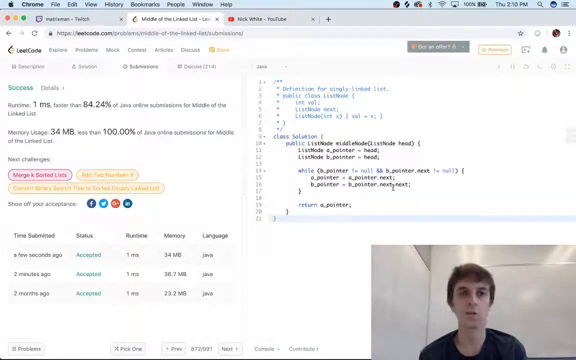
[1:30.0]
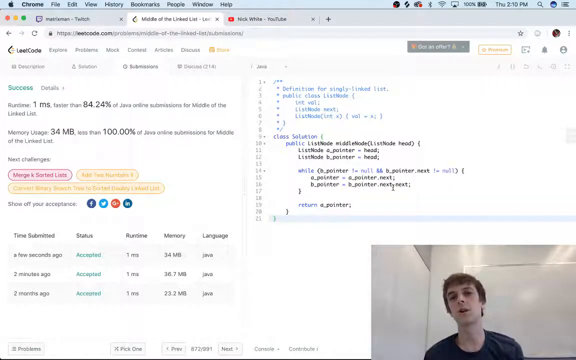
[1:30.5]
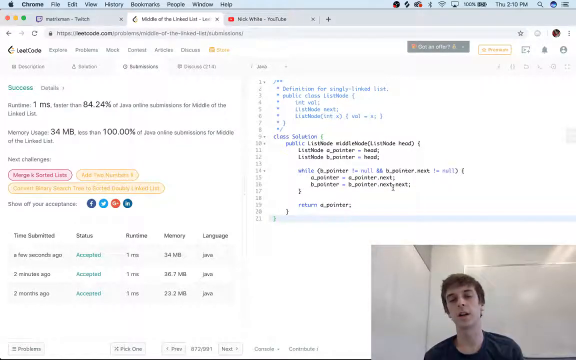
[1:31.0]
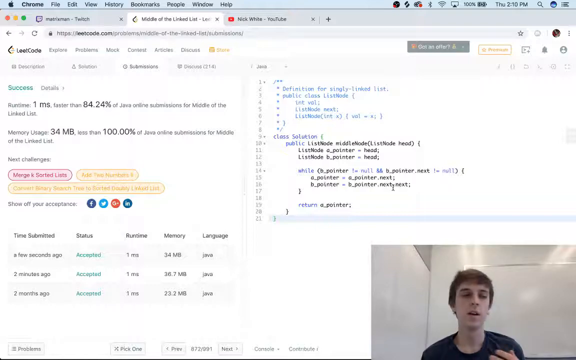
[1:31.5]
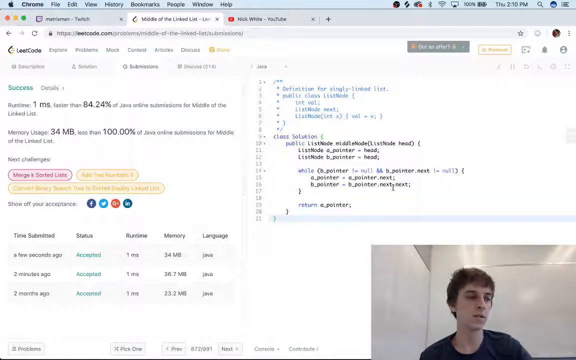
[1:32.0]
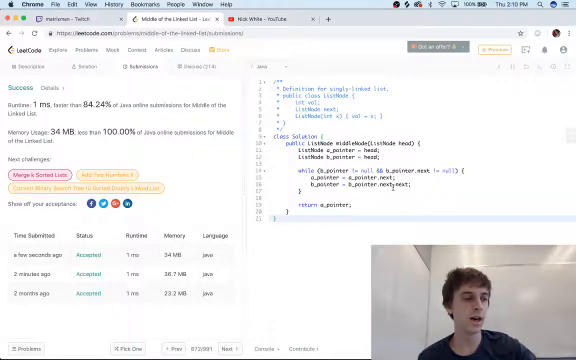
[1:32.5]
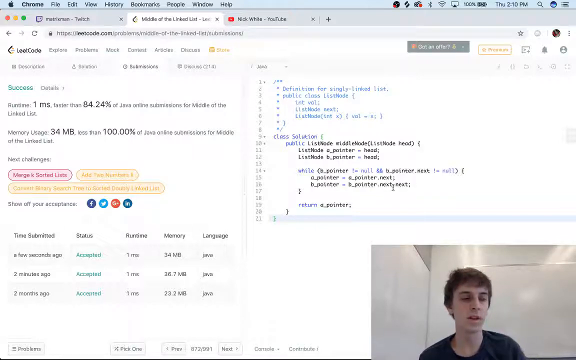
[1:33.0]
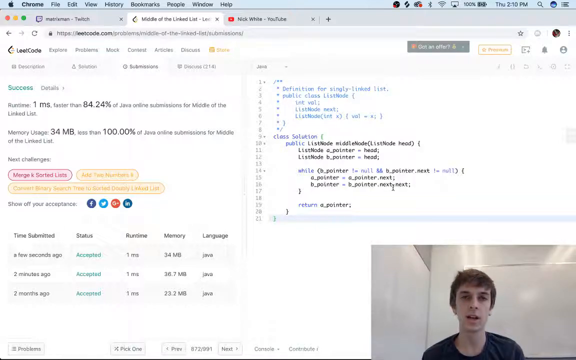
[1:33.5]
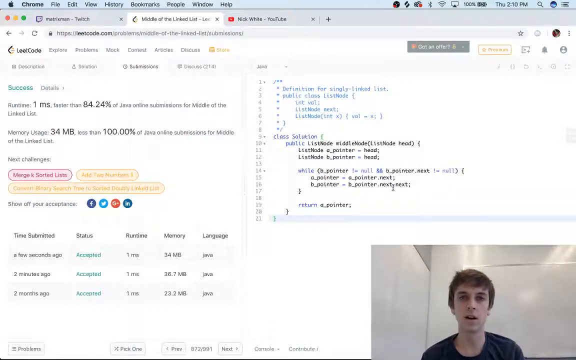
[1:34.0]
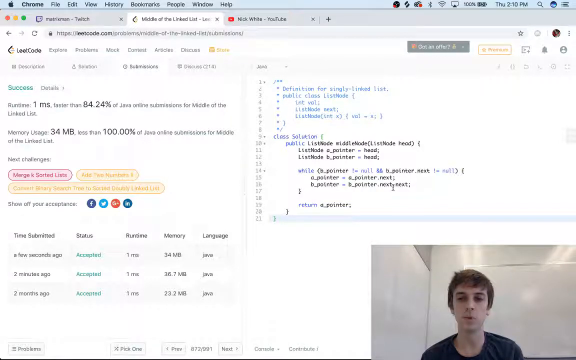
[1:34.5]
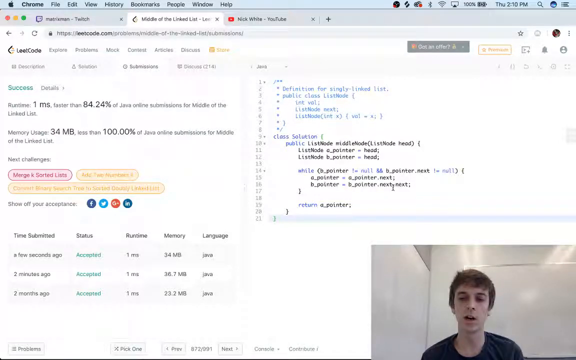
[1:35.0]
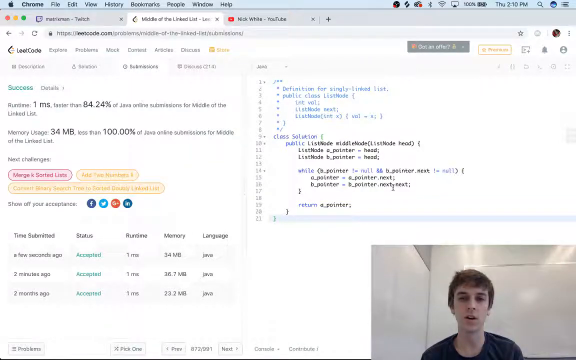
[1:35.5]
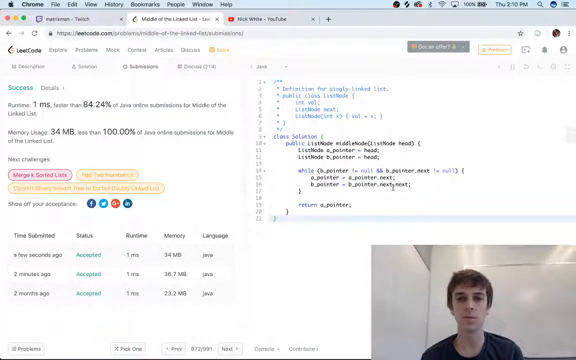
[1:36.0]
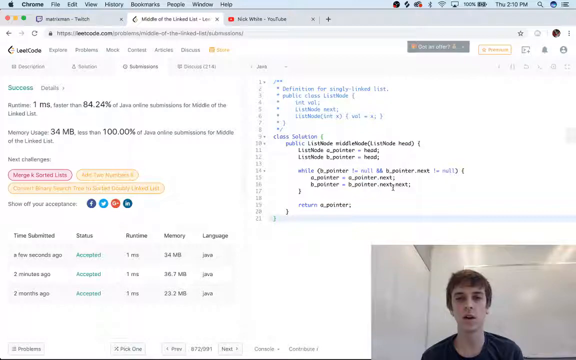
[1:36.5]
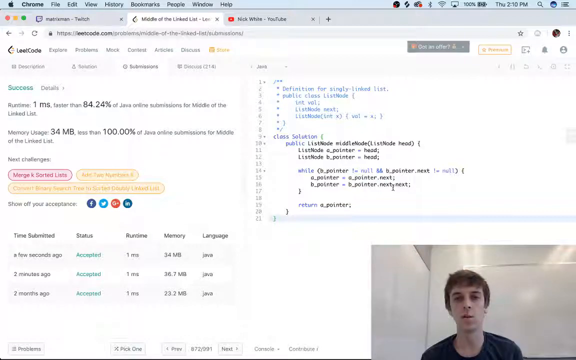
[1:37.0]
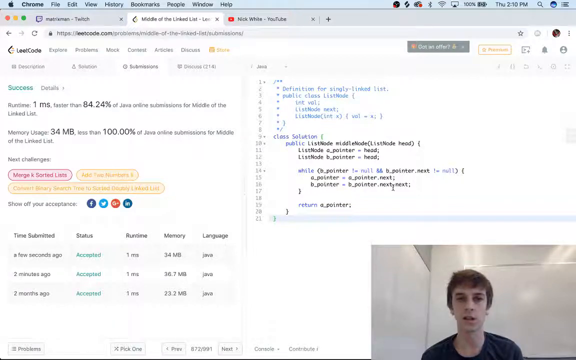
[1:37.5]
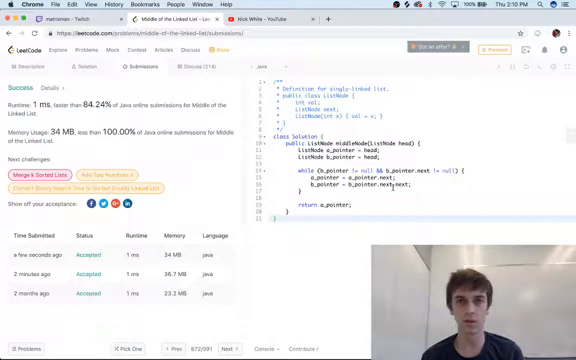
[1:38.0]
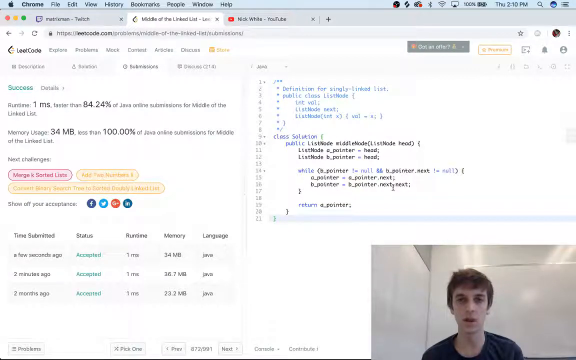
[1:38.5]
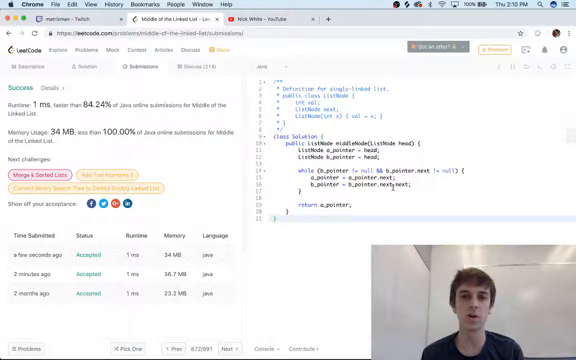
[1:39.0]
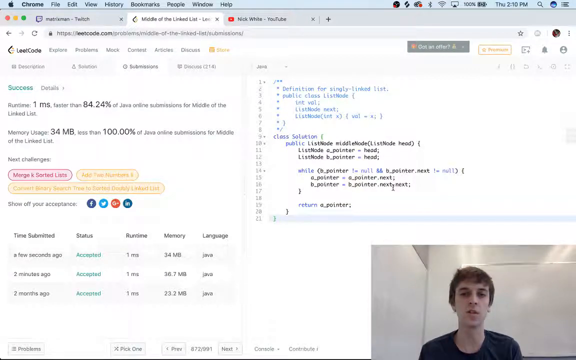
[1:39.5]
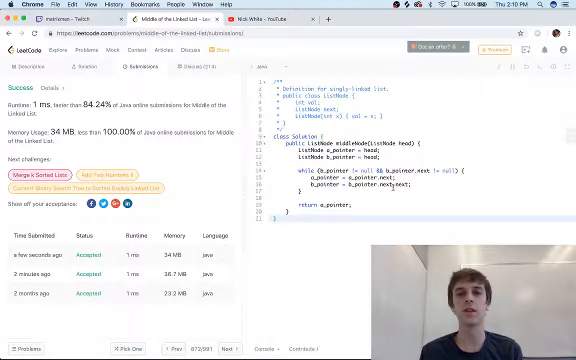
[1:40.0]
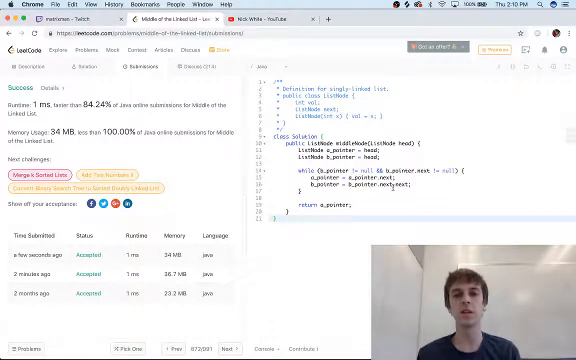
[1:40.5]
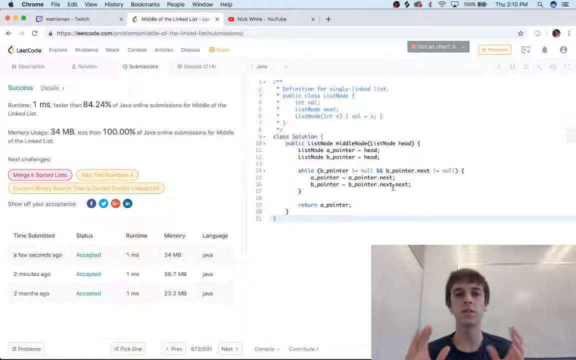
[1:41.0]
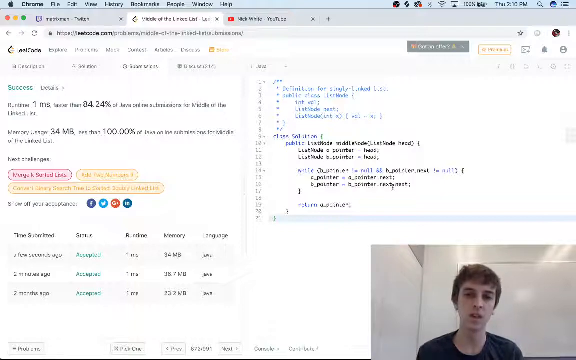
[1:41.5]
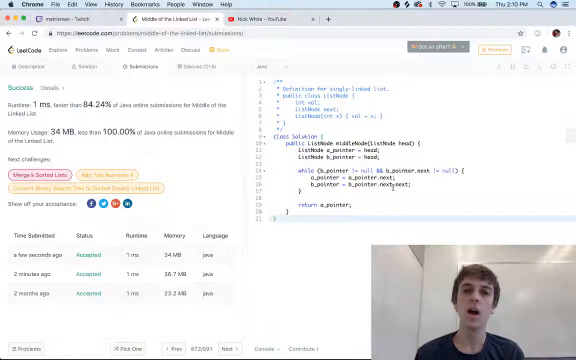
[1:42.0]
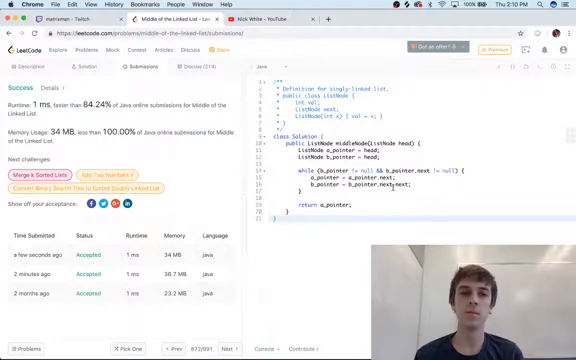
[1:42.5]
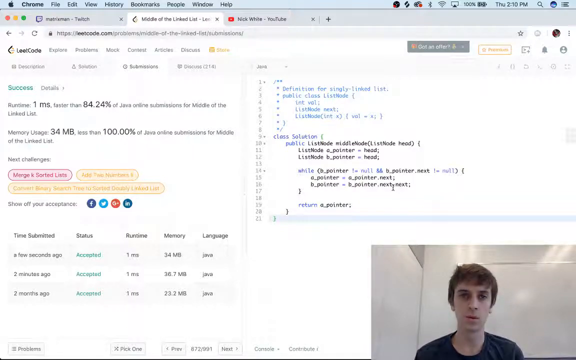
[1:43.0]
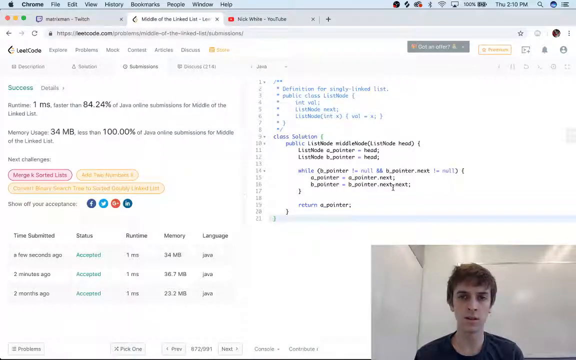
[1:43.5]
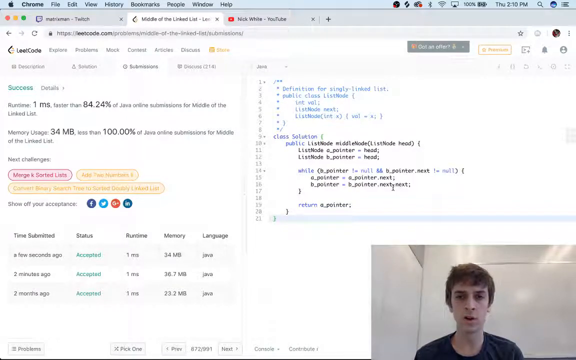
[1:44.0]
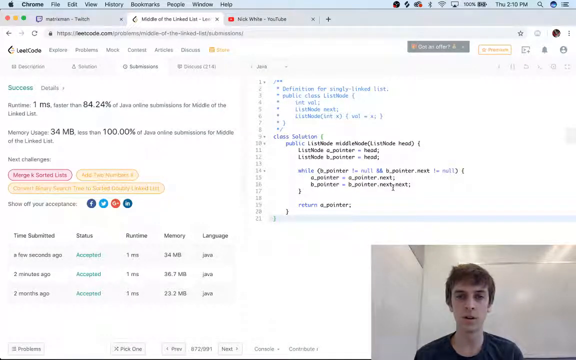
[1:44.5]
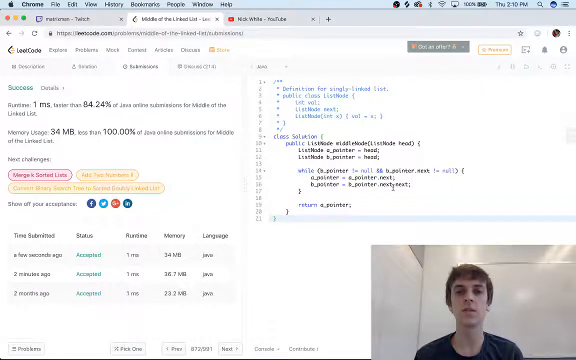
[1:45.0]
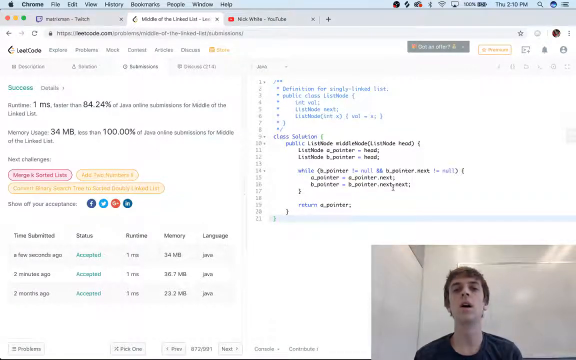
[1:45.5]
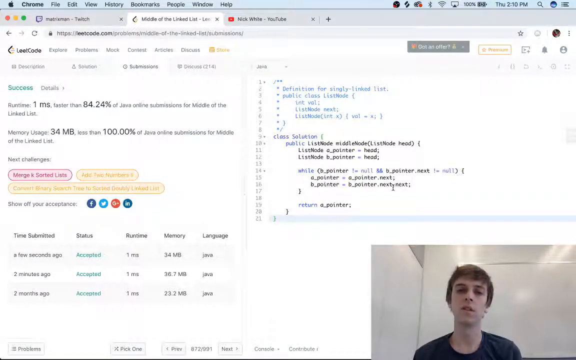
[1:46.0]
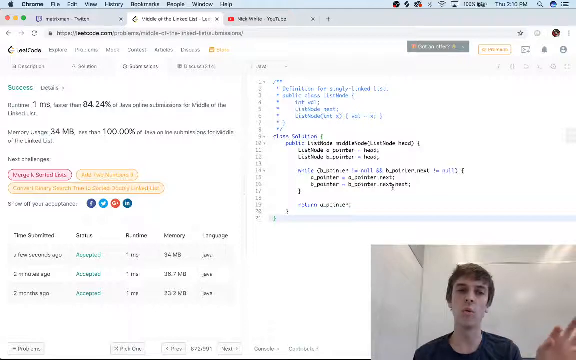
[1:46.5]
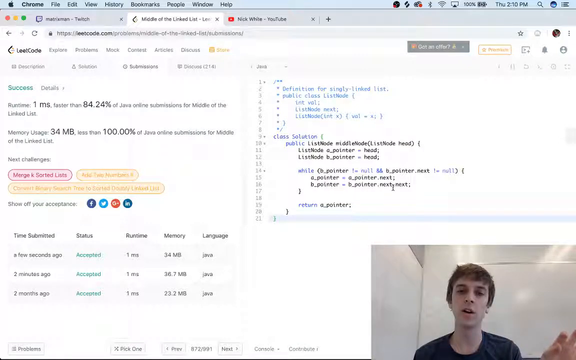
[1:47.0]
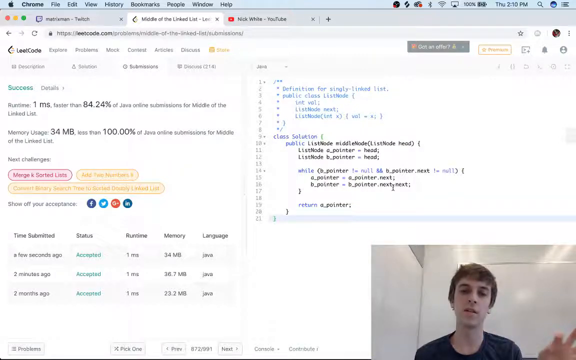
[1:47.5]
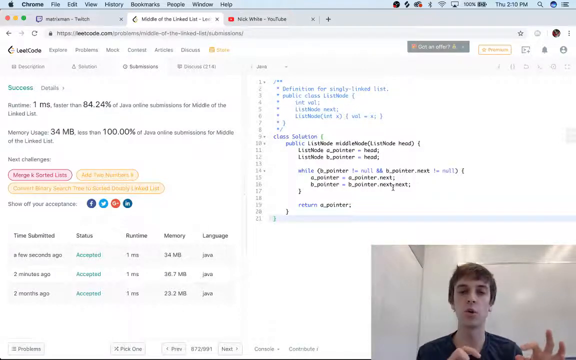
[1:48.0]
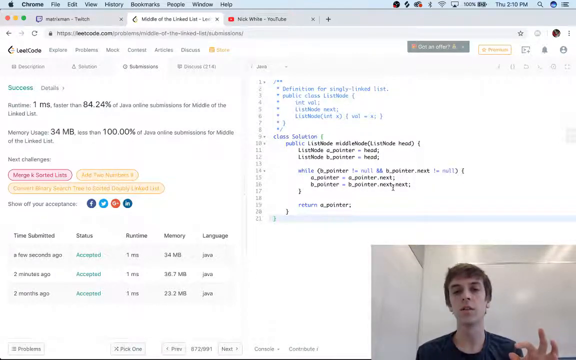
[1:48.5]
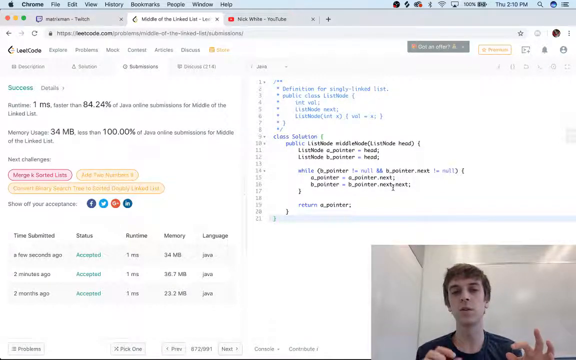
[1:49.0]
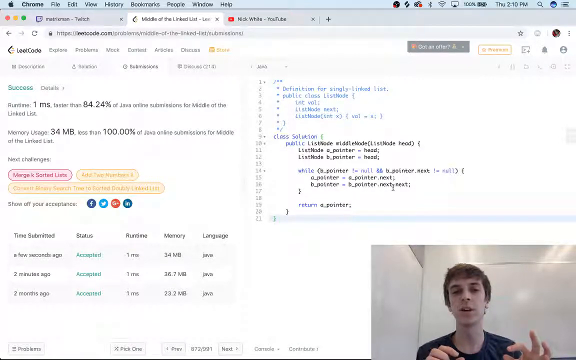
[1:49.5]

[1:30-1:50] The speaker makes strong eye contact with the camera and uses hand gestures and body language to emphasize his points. The left side of the screen where he submitted his work reads "success". The details say the runtime was "1ms", "faster than 84.24% of Java online submissions for middle of the linked list", and memory usage was "34mb", "less than 100% of Java online submissions for middle of the linked list". The next challenge, in a red circle, reads "merge K sorted list"; another challenge, in a yellow circle, reads "add two numbers"; and a third, also in a yellow circle, reads "convert binary search tree to sorted doubly linked list". Underneath, it reads "show off your acceptance" with links to social media sites such as Facebook, Twitter, Google Plus, and LinkedIn. All of these results are on a Submissions tab on the LeetCode page.